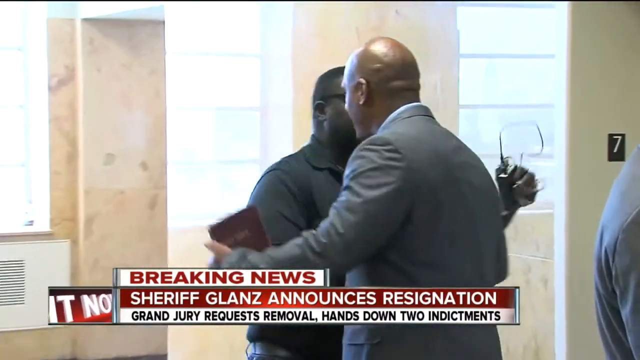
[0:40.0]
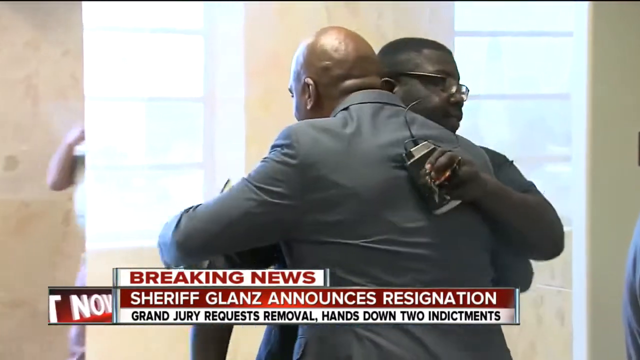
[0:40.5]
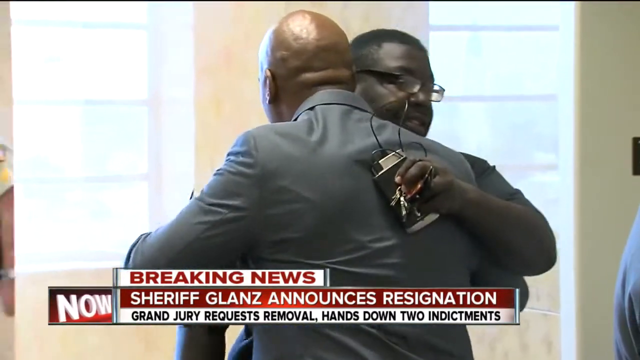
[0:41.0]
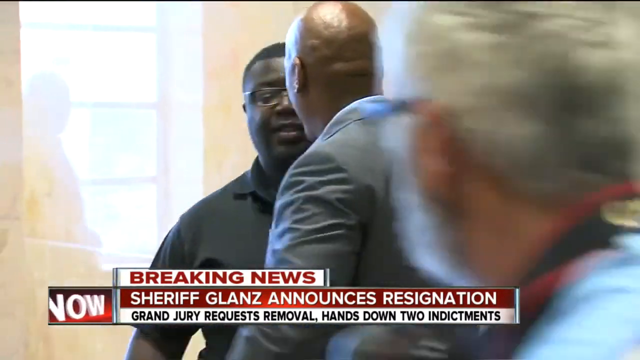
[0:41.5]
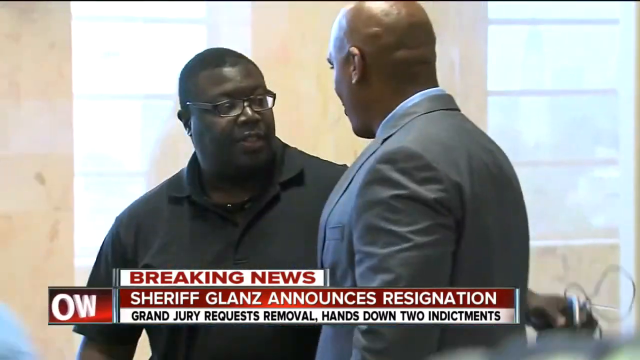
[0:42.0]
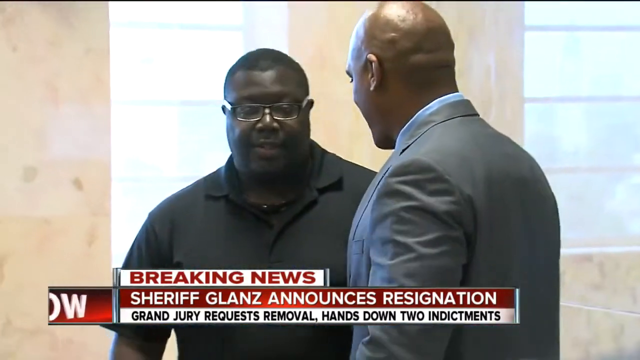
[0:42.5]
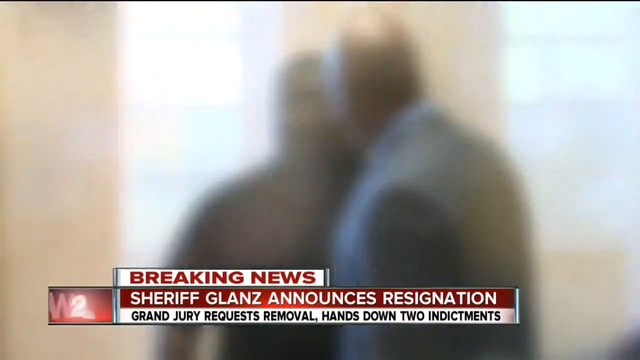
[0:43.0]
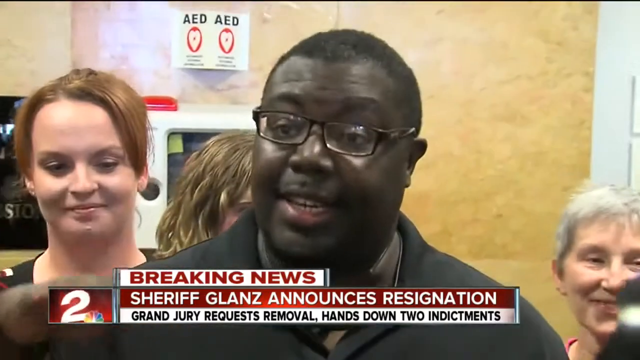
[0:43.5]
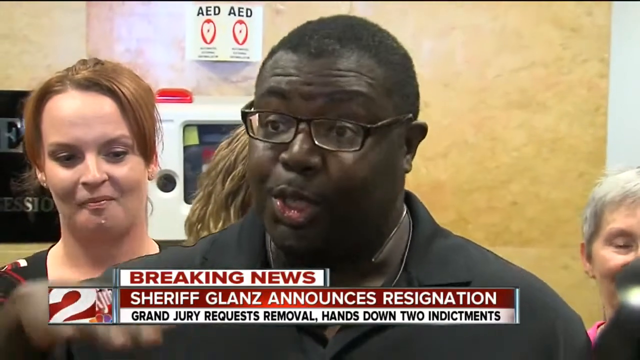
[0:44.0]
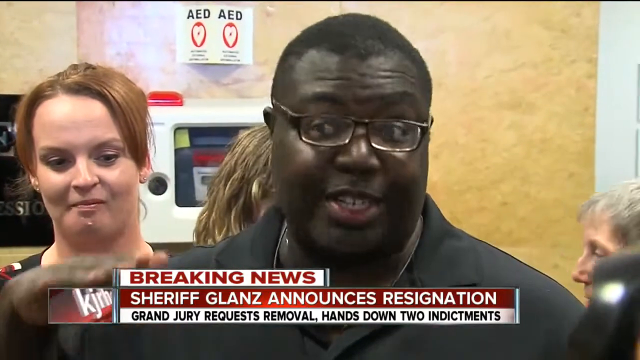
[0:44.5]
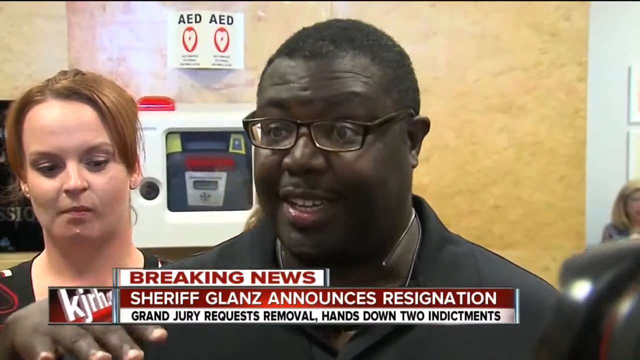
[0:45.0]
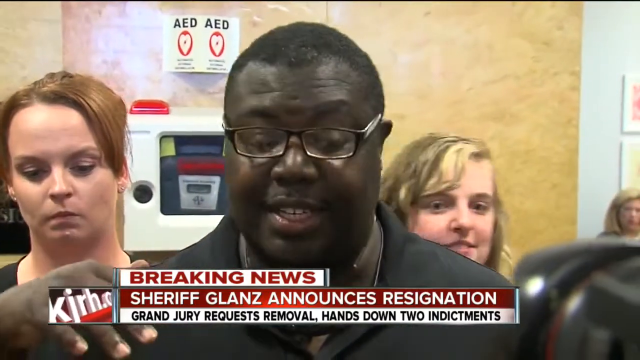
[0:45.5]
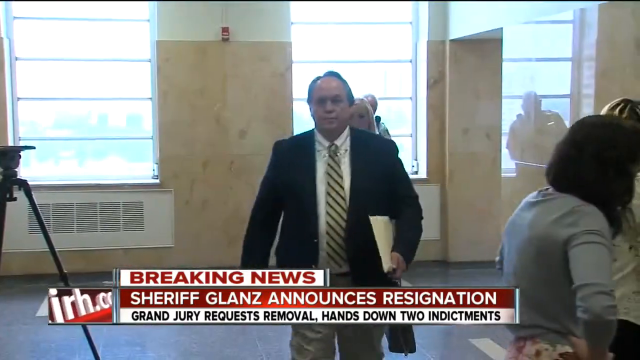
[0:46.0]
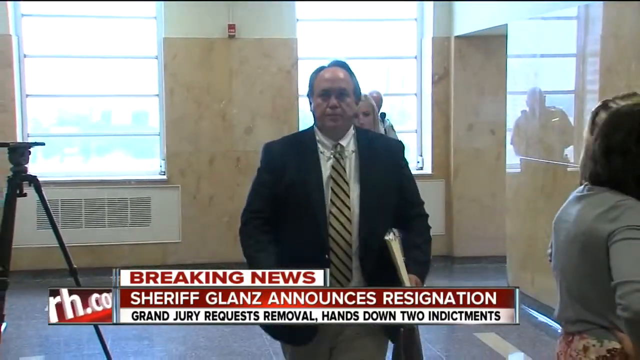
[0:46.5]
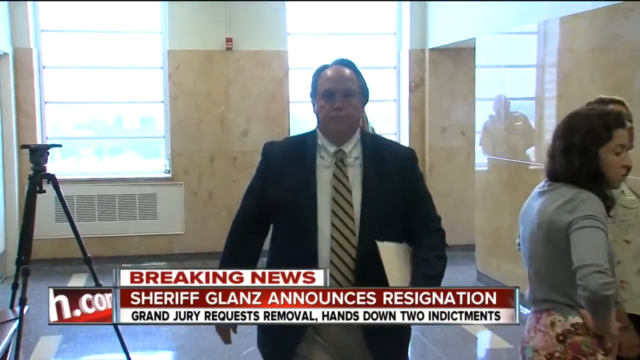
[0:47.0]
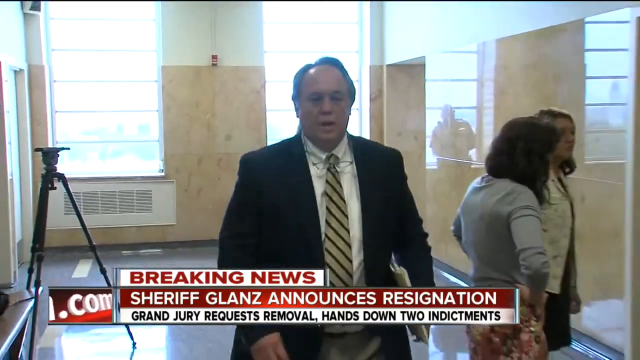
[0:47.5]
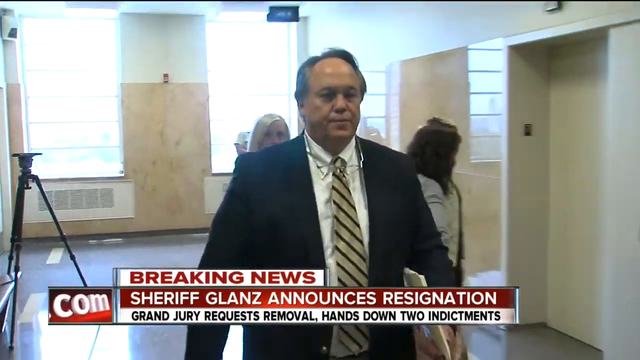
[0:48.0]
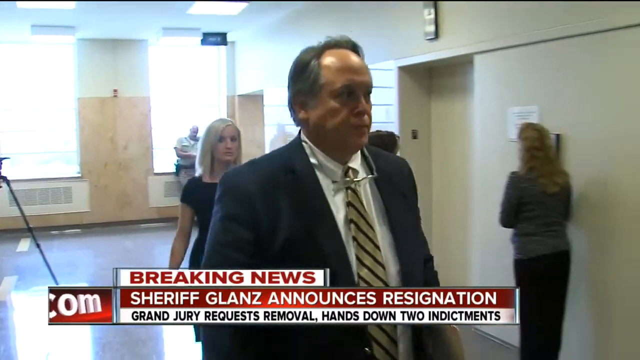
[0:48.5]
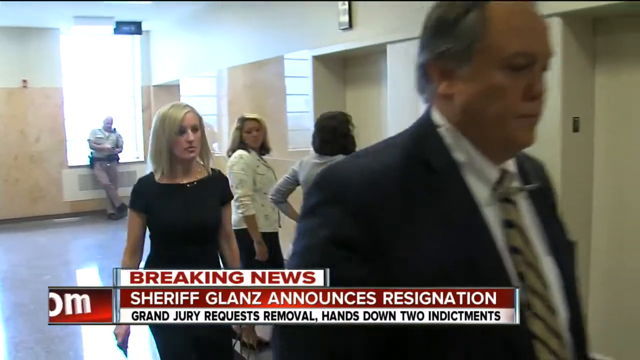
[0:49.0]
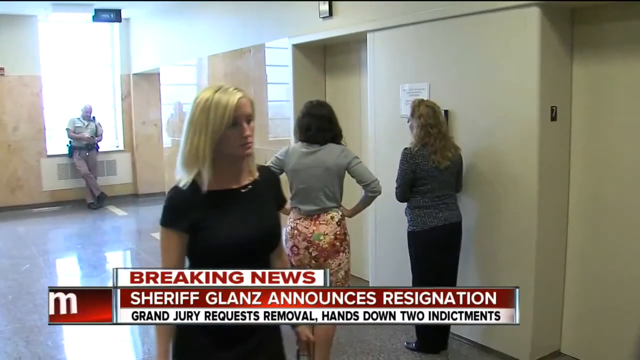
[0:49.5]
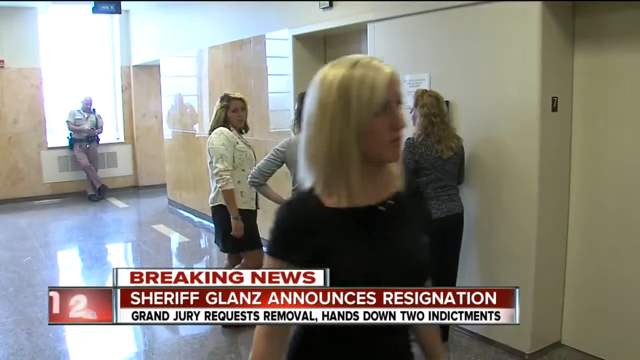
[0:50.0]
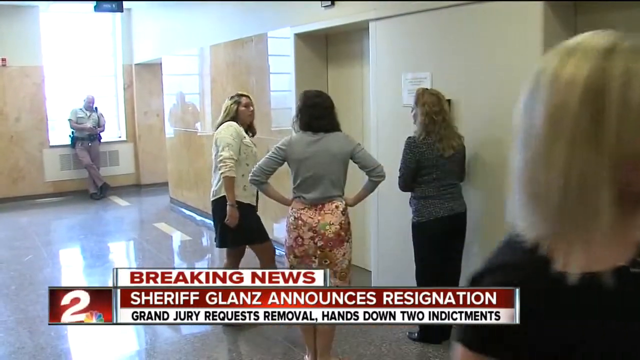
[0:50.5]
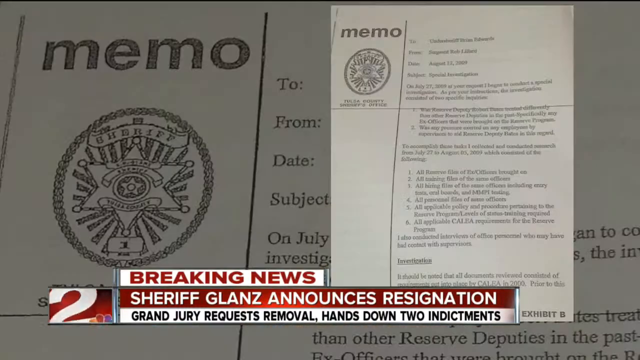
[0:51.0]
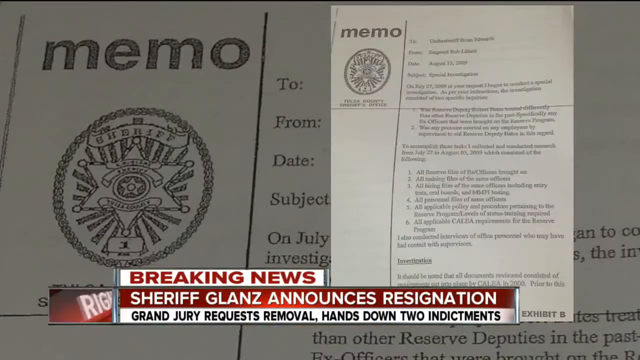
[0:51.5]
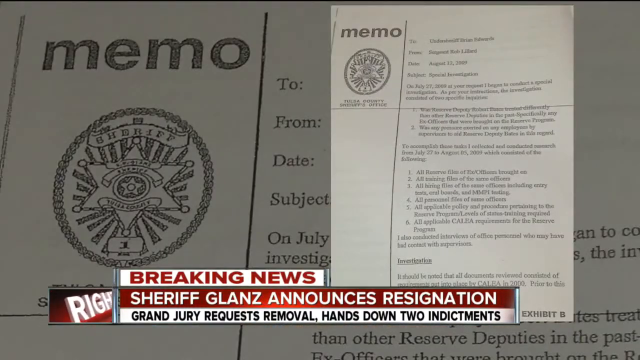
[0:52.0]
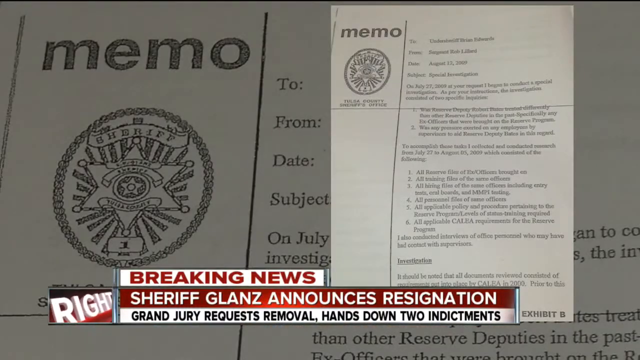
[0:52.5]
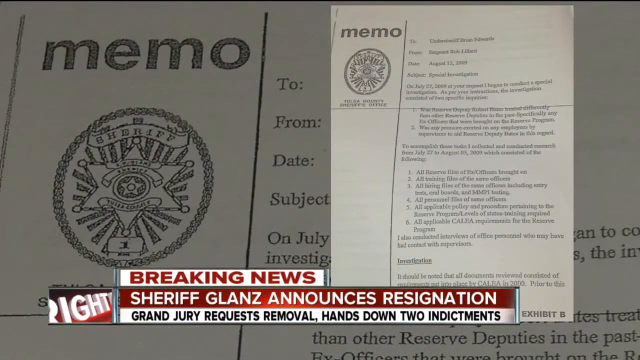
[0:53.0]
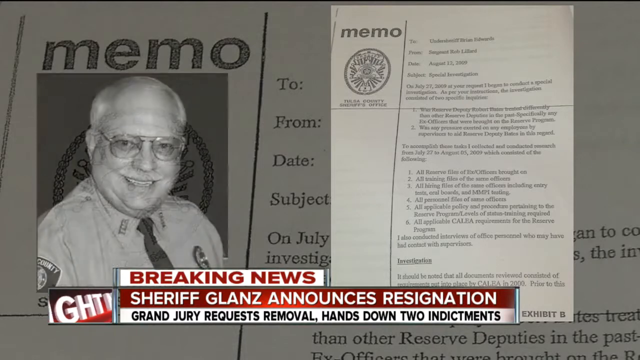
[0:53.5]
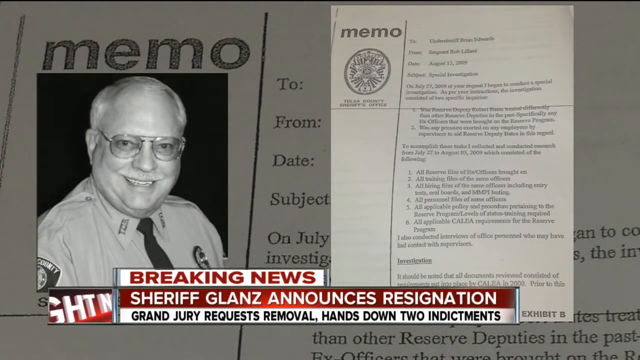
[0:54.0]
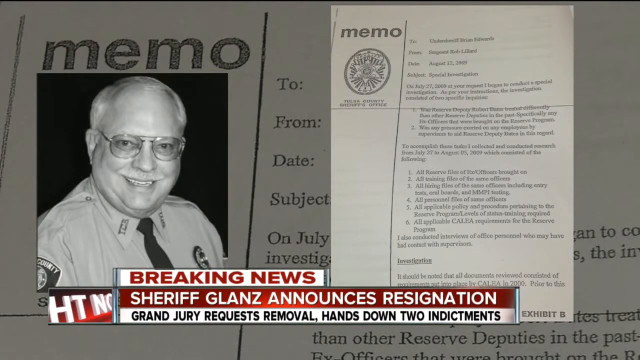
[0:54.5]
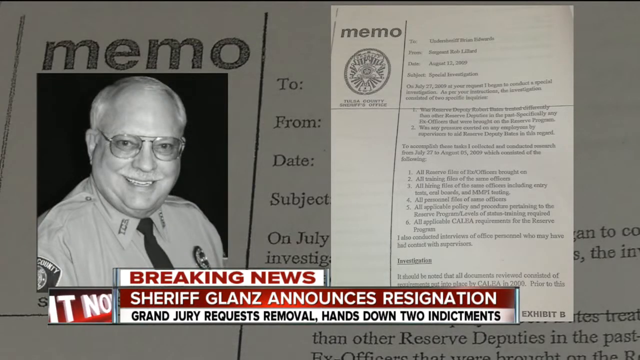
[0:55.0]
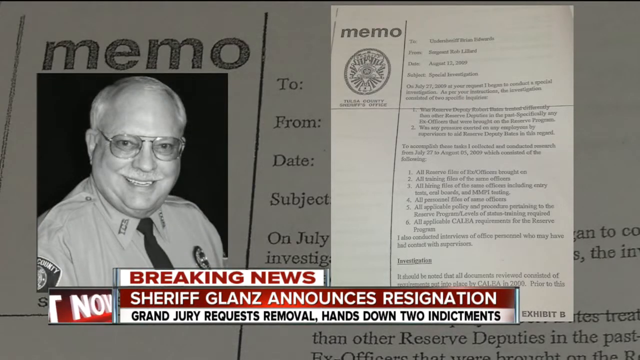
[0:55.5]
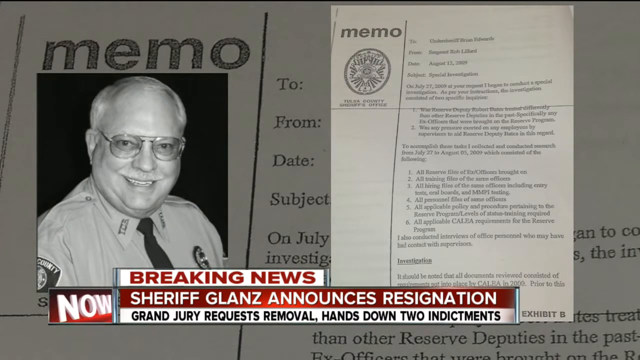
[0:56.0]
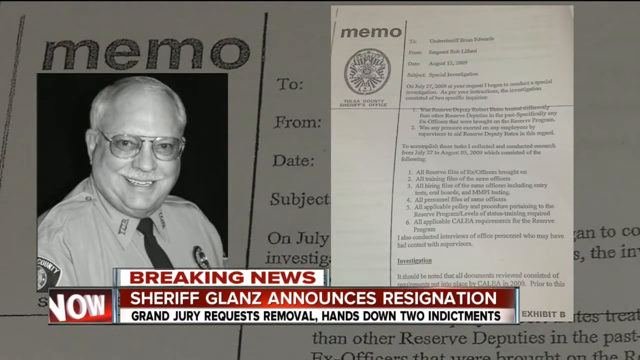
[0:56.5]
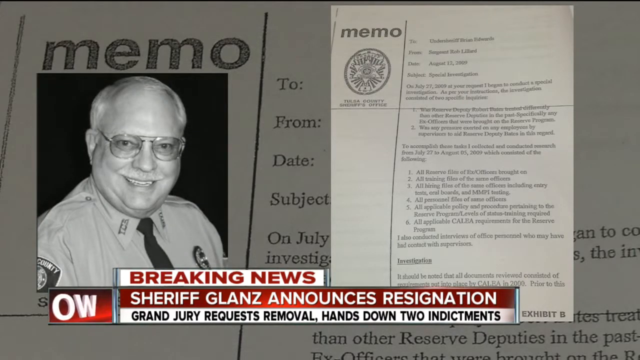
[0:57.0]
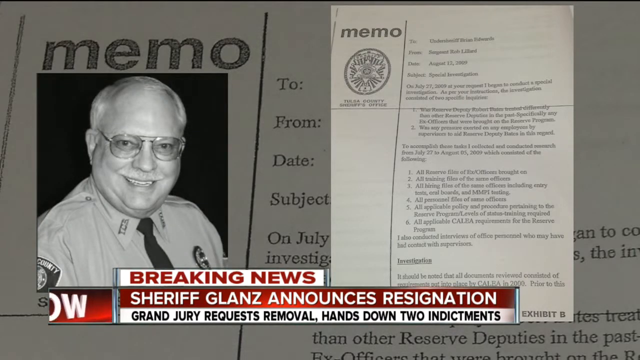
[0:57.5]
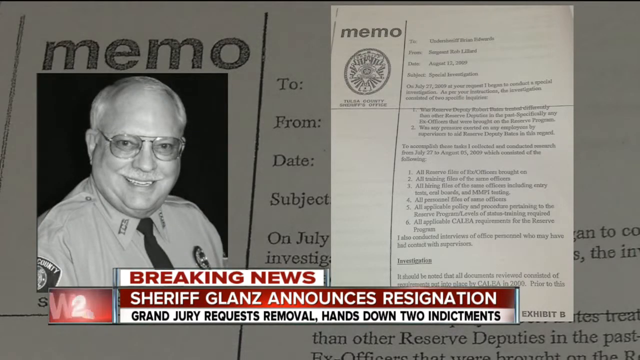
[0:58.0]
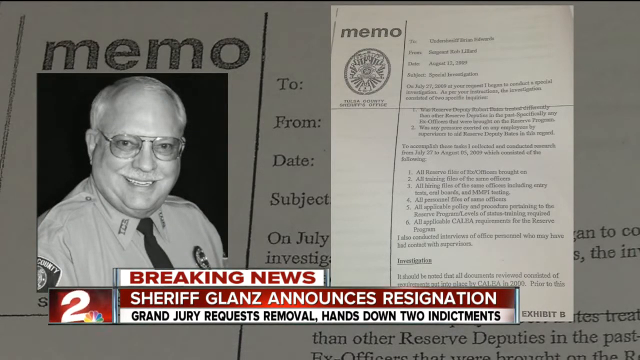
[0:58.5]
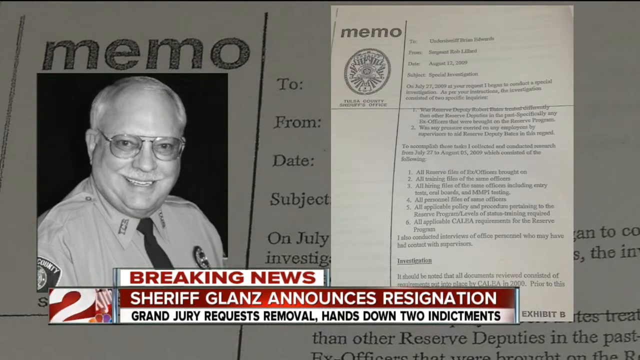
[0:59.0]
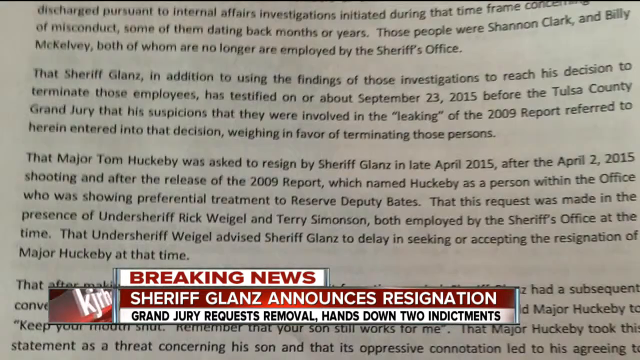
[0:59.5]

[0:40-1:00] The two black males embrace in a hug. The short black male holds in his left hand what appear to be keys, a key chain, and an electronic device with an attached black cord. The tall, bald black male holds in his left hand a book that appears to say "Holy Bible." In the background, a sheriff's deputy walks past a white, bald male. The two black males speak to one another, and then the video transitions to breaking news, with a banner about the sheriff's resignation at the bottom of the screen. The short black male with black glasses speaks toward the camera, gesturing with his right hand. Many individuals are in the background, including a white female in her mid-thirties with short brown hair and a black shirt, and a very short white female with short white hair; directly behind the black male is a white female with shoulder-length blonde hair. The video transitions to a white male in his late 40s wearing a dark blue suit jacket, a yellow and black striped tie and a white shirt. He walks out of a courtroom past two females waiting for an elevator, followed by a white female in her early 30s with shoulder-length blonde hair and a black dress. One of the females by the elevator turns her head to look at the man walking out. A sheriff's deputy is propped up on a windowsill in the background. The video then transitions to a close, zoomed-in view of a memo paper showing "to," "from," "date" and "subject" fields. In its bottom left corner is an image of a white male in his late 50s in a sheriff's uniform, smiling and wearing glasses. The memo is not legible.